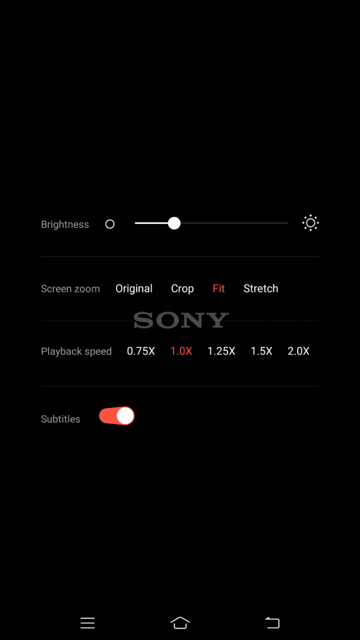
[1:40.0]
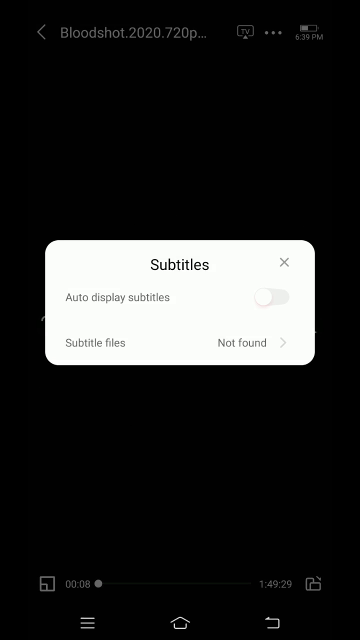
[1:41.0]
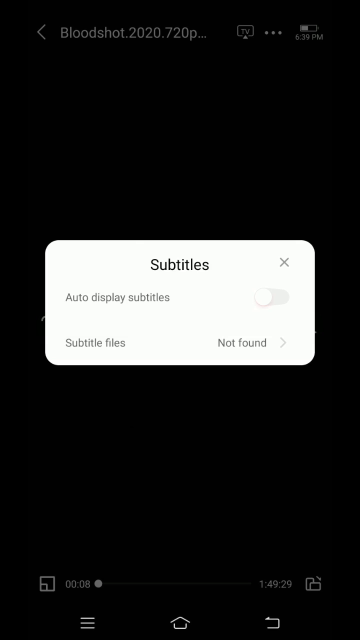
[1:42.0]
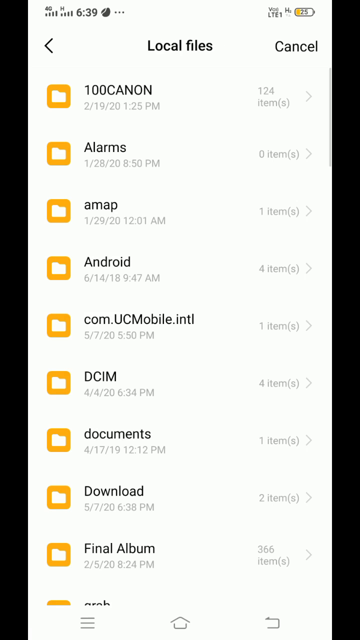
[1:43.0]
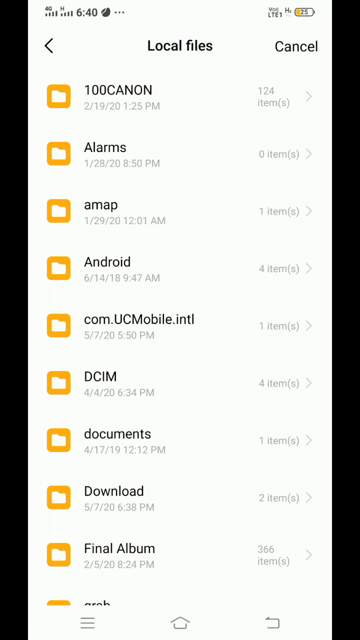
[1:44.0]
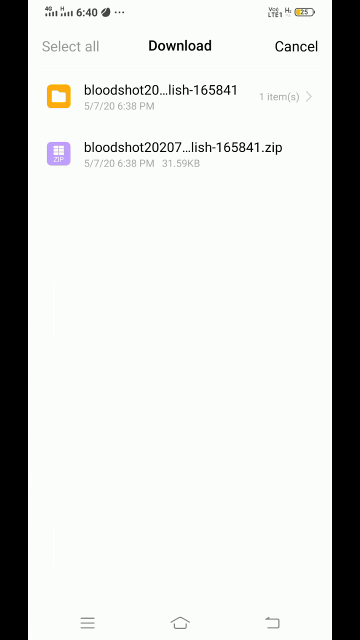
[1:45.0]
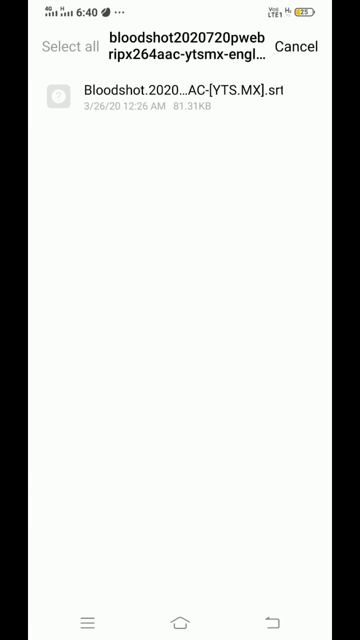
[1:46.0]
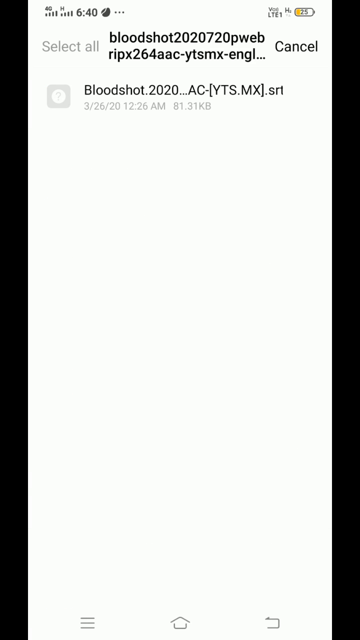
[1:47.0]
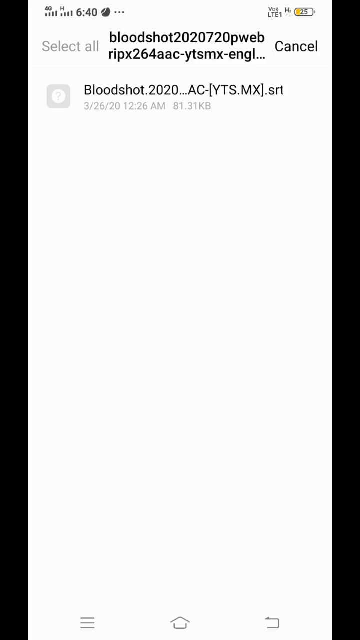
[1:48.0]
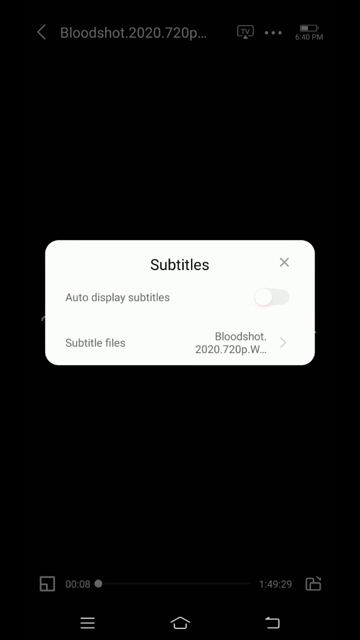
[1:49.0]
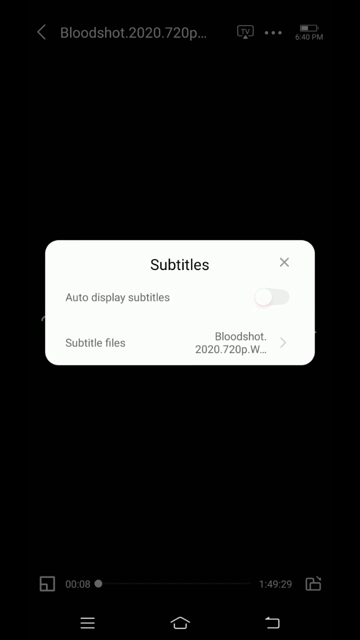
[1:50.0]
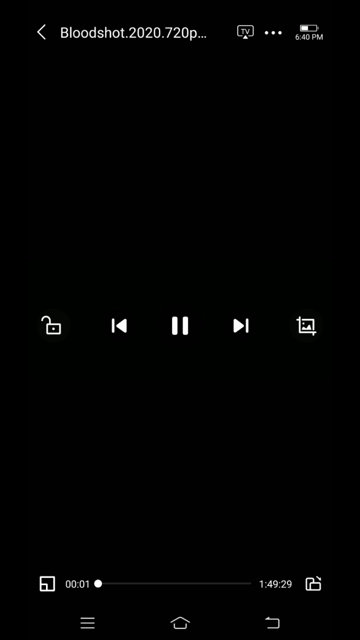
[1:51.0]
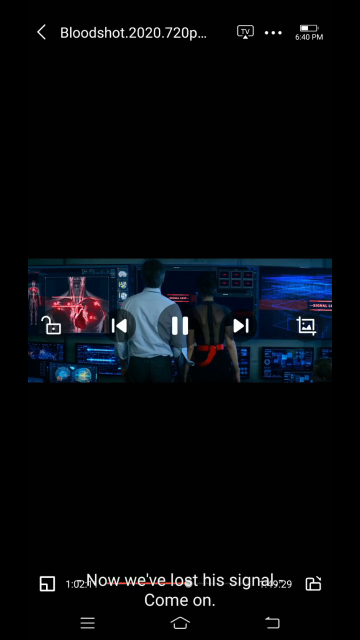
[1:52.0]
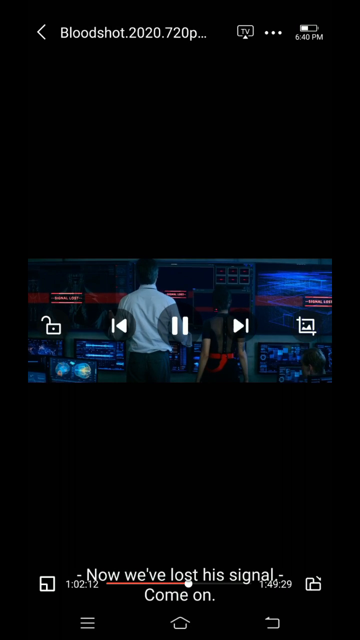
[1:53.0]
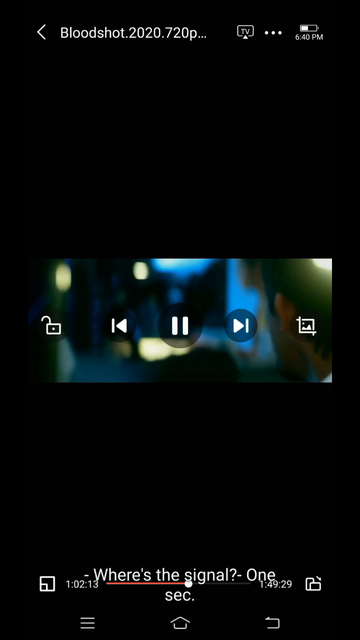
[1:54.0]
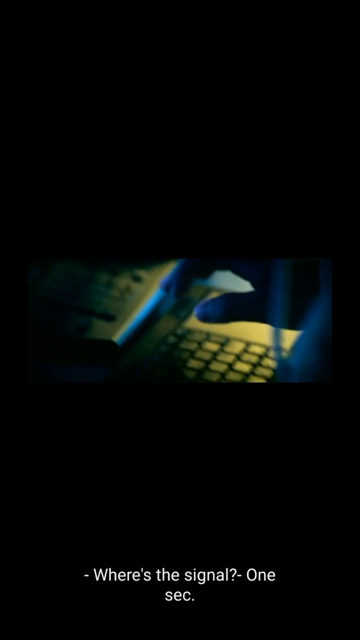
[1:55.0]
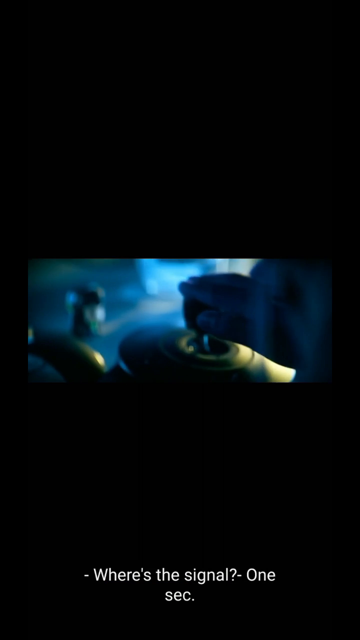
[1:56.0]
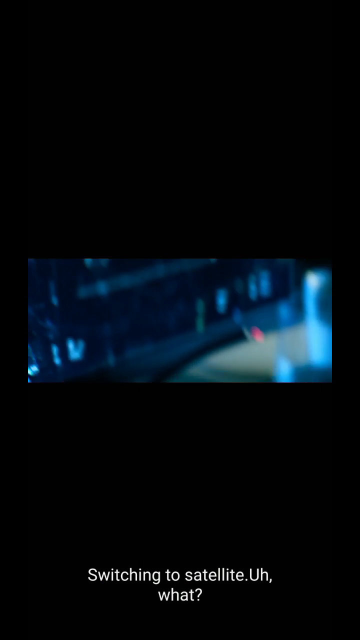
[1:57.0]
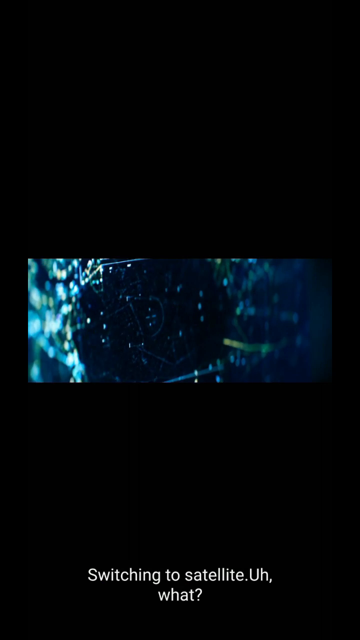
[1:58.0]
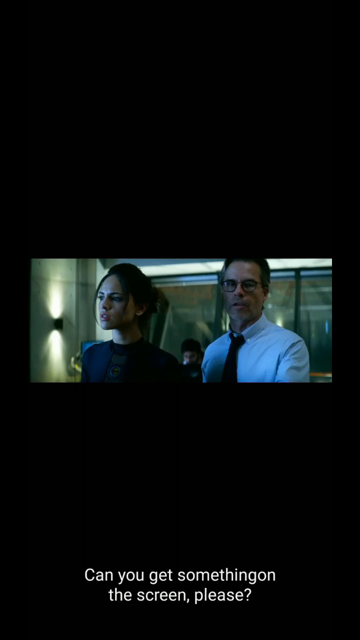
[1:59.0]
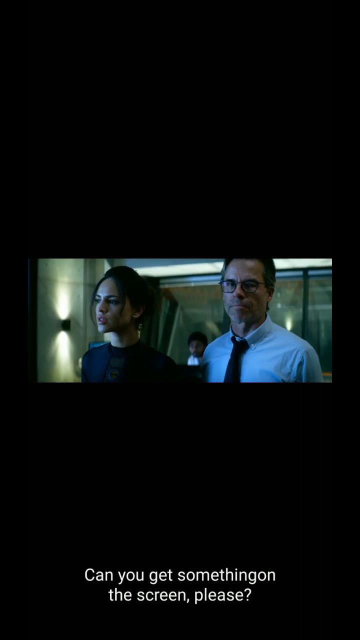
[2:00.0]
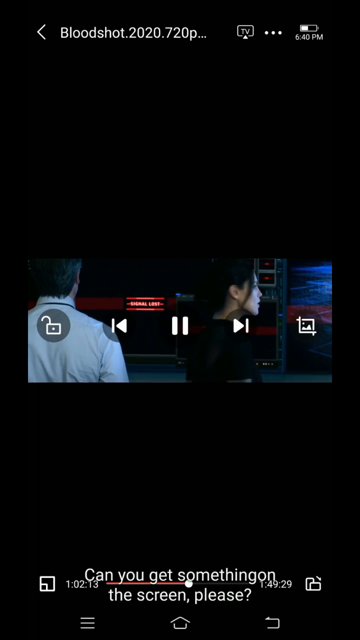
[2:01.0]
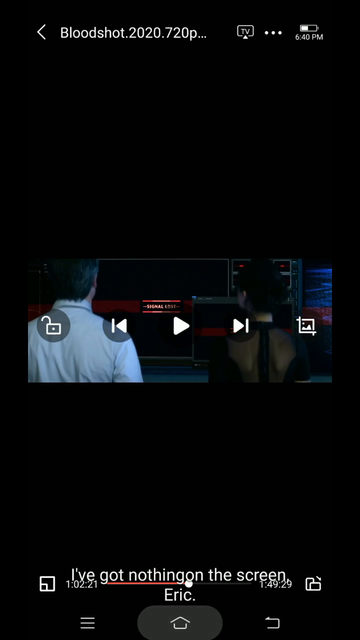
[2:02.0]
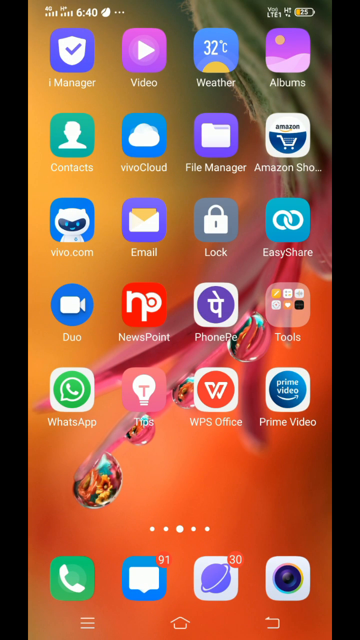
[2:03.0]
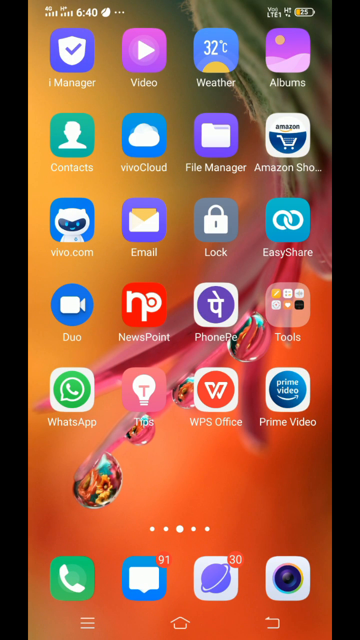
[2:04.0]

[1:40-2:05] A white box opens in the centre of the screen with Subtitles written on it and a grey cross to the right. In black is written Auto Display Subtitles, with a greyed-out toggle button to its right. Below is a line of text saying Subtitle Files, and to the right of it, Not Found. The Local Files screen moves in from the right to take over the screen. Download flashes, and the Download folder appears with the two files listed. The Bloodshot folder flashes, and inside it is a listing for a Bloodshot SRT file. It flashes grey, and the whole white screen moves off to the right, leaving a black screen with a white box in the centre saying Subtitles. Next to Subtitle Files is now the file name for Bloodshot. The view cuts back to the Play, Back, Forward controls and Play is pressed. The film is now one hour in, shown in a horizontal letterbox in the middle of the screen with Pause, Back and Forward controls superimposed on top. At the very bottom of the black screen white subtitles appear. The film cuts between different shots as more white subtitles with dialogue from the film pop up at the bottom of the screen, before the controls reappear. Pause is pressed, and the whole screen minimises to the centre and becomes transparent, returning to the second home screen of the phone.